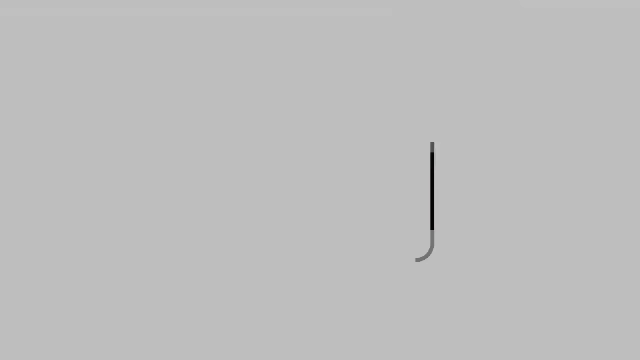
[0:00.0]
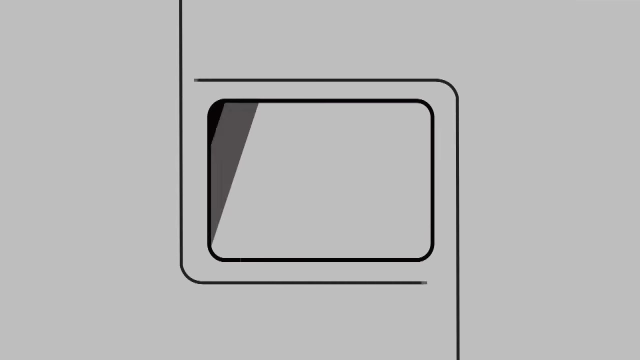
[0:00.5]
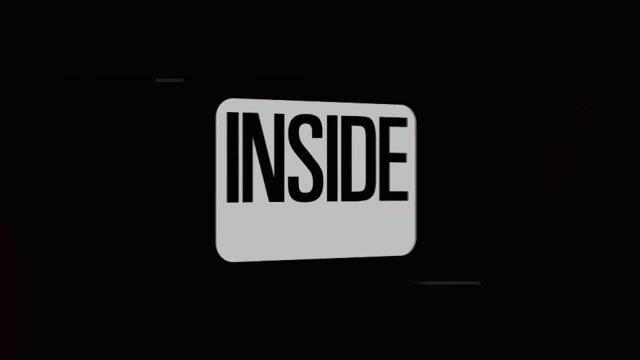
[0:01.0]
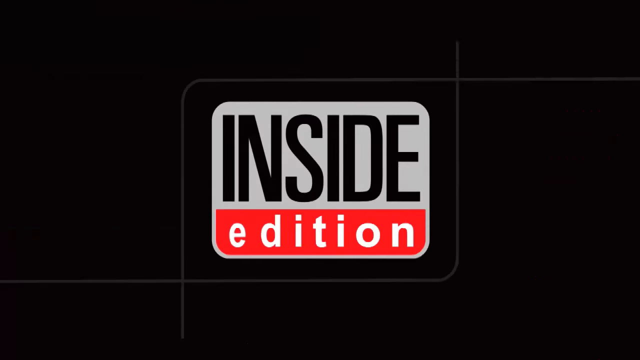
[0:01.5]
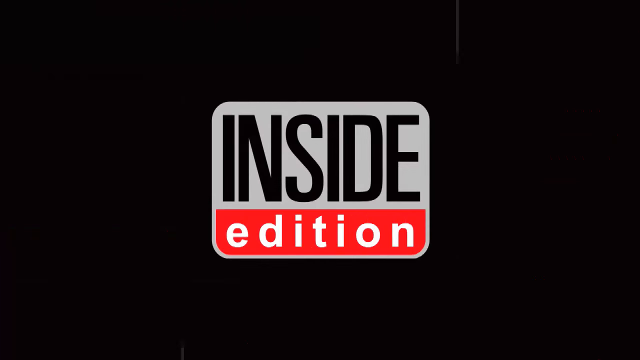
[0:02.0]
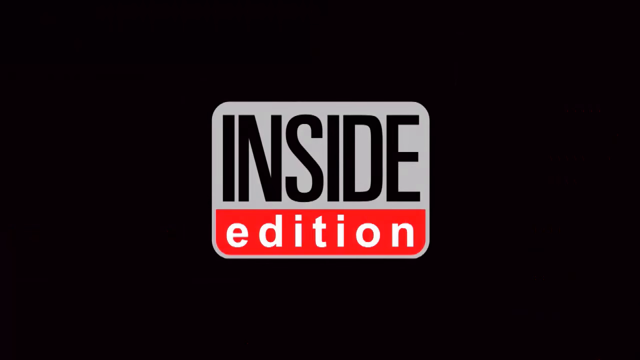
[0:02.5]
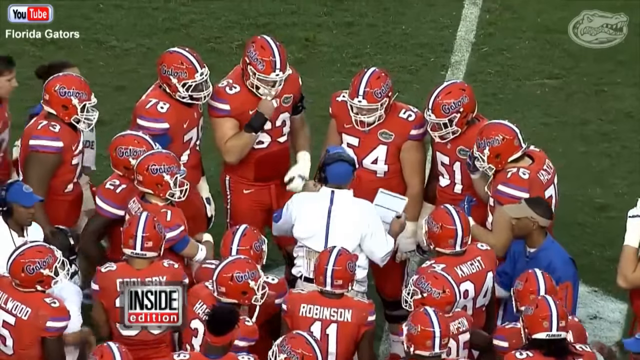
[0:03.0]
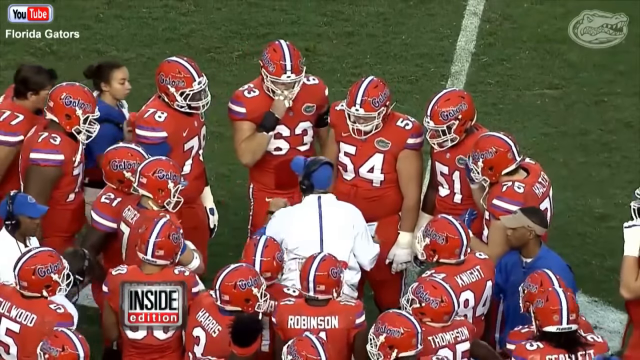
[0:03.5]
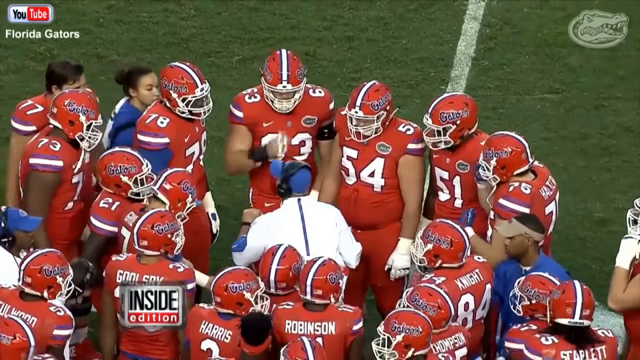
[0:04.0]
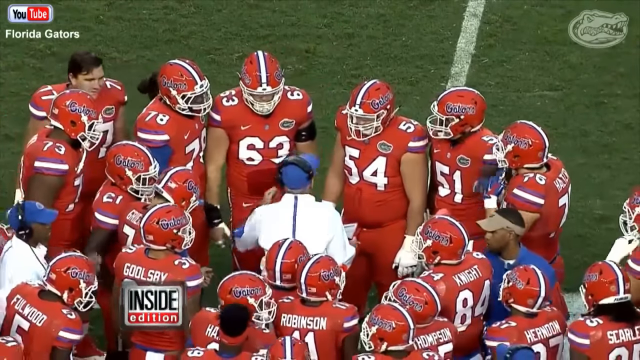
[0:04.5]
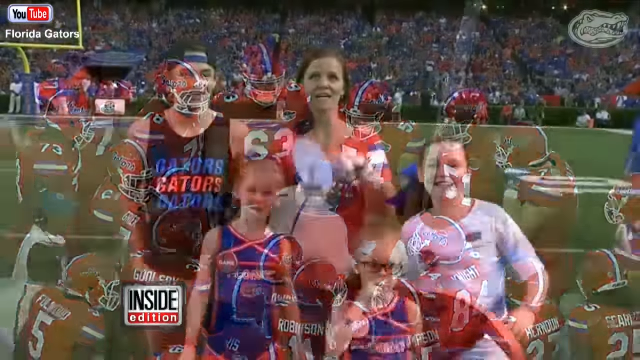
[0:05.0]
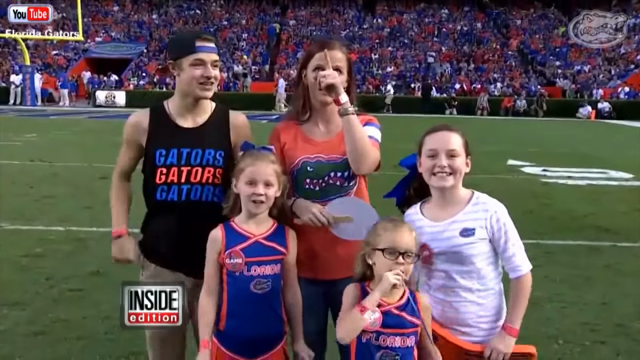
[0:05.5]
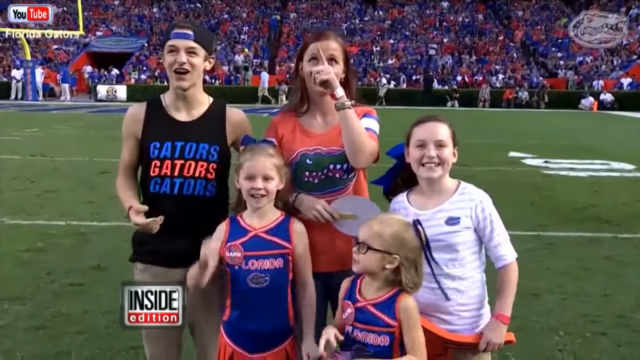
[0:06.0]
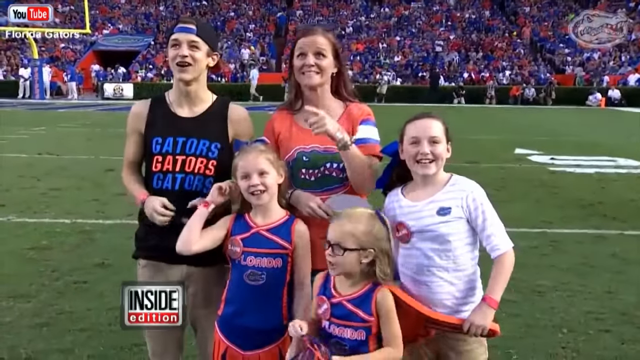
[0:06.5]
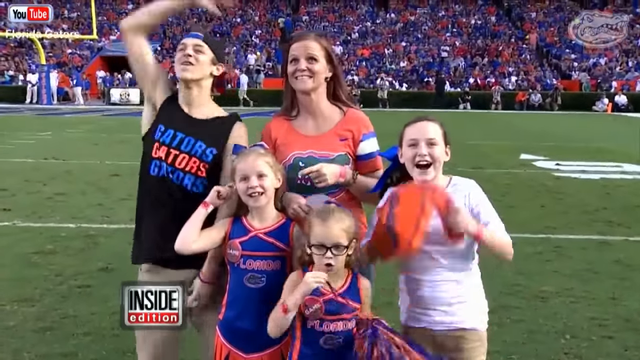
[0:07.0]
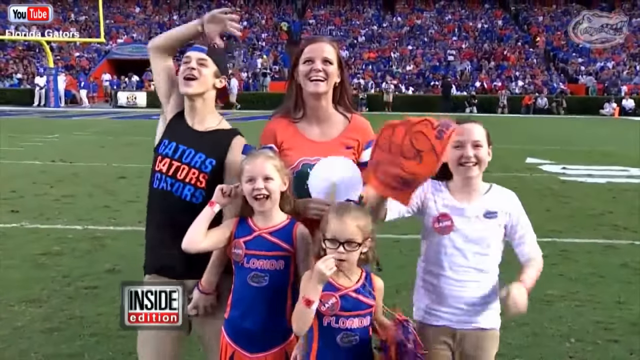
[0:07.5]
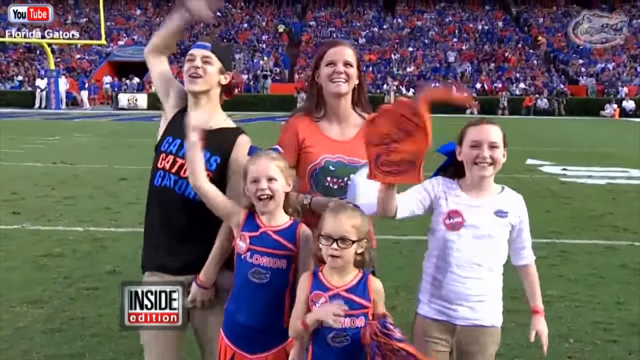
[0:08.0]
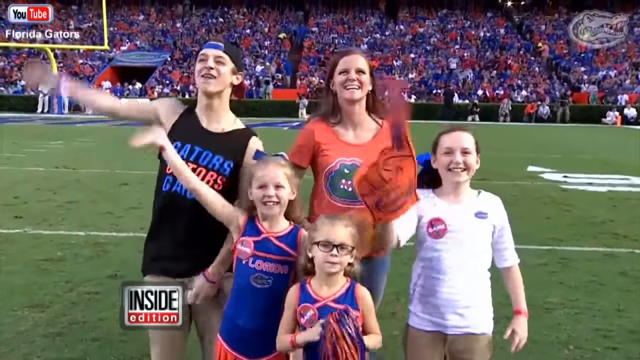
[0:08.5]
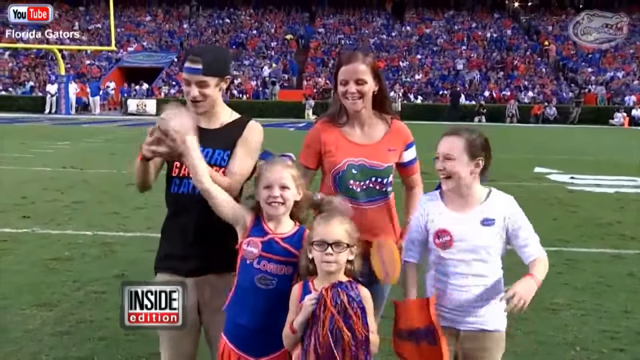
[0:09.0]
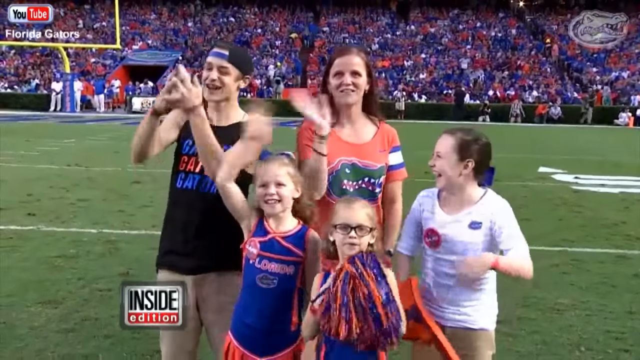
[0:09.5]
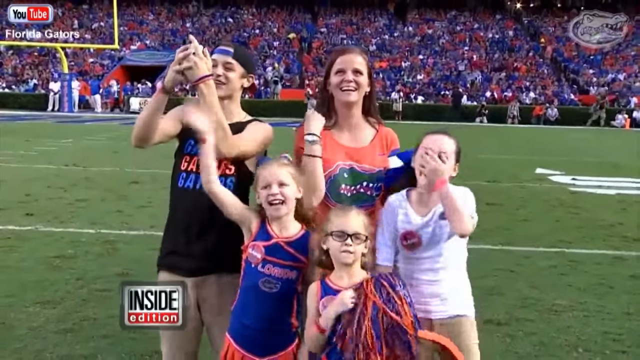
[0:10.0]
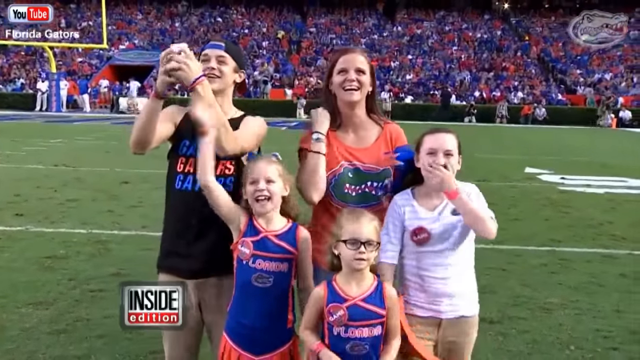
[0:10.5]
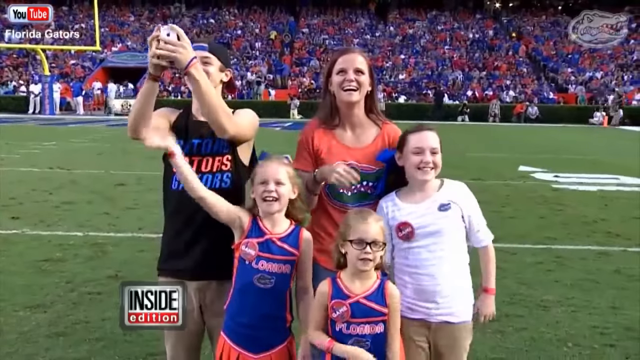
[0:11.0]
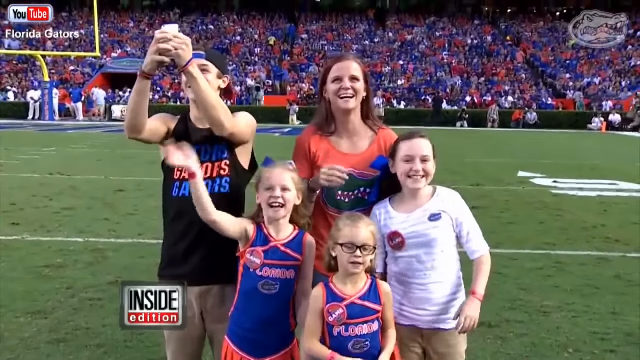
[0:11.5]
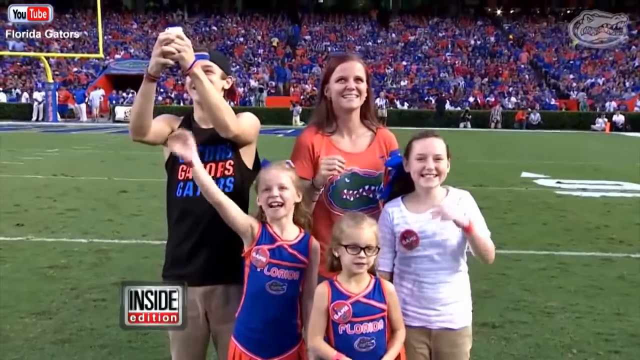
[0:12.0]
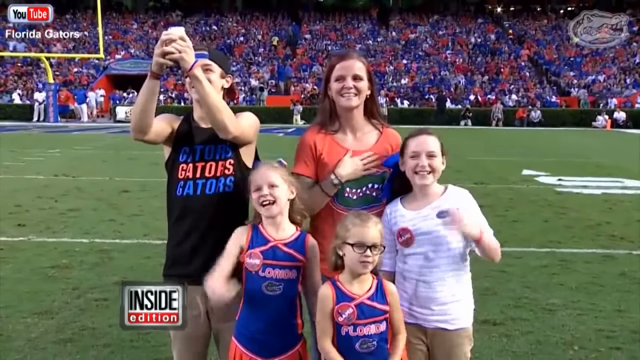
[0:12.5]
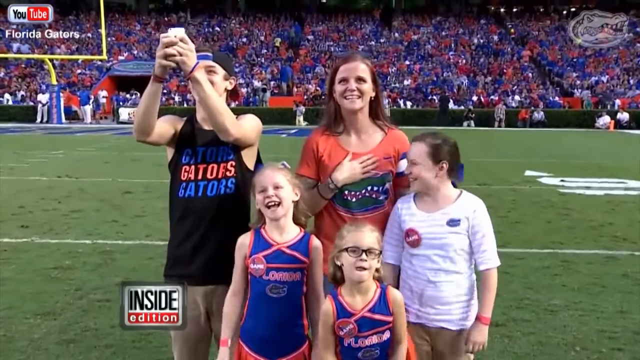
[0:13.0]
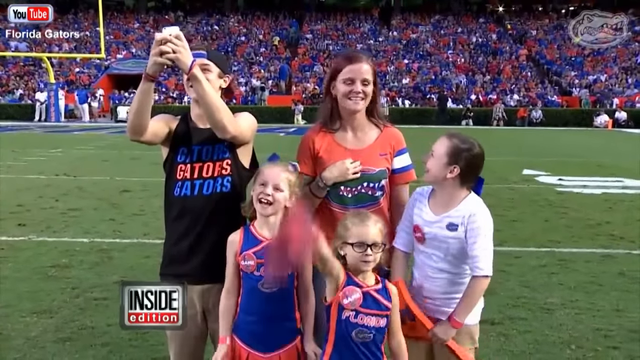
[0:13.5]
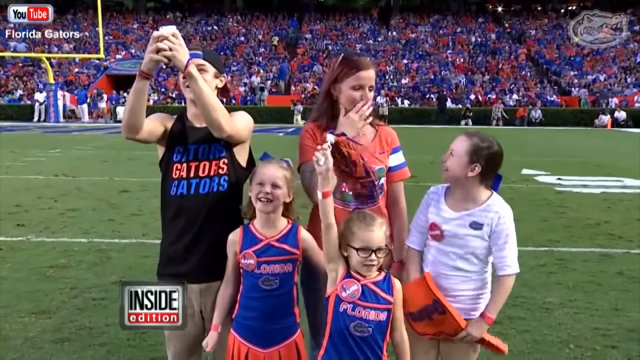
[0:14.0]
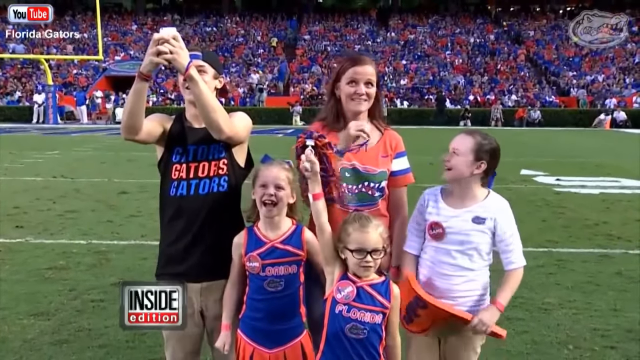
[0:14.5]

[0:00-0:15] A Florida University football game featuring the Gators is shown. A group of football players stands in a huddle while the coach talks to them; play is paused, possibly at halftime or before the game. Next, a family stands out on the field: a mom, three daughters, and a son next to her, all waving. Two of the daughters are dressed as cheerleaders and the third is dressed normally. The son wears a tank top that says "Gators", and the mom wears a Florida Gators shirt. The family is probably being shown on the Jumbotron. The video is from Inside Edition, and a short Inside Edition intro graphic appears at the end of this opening part.